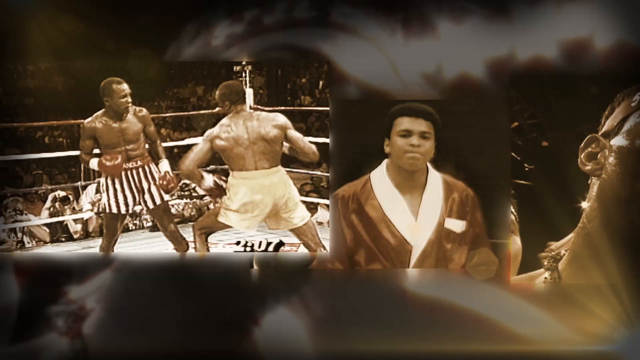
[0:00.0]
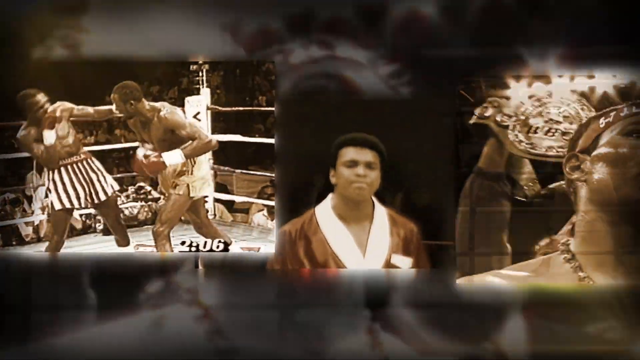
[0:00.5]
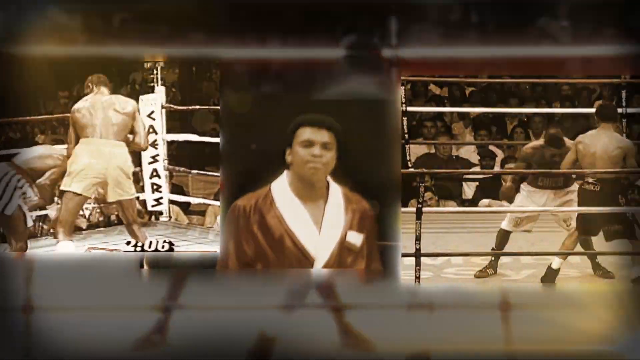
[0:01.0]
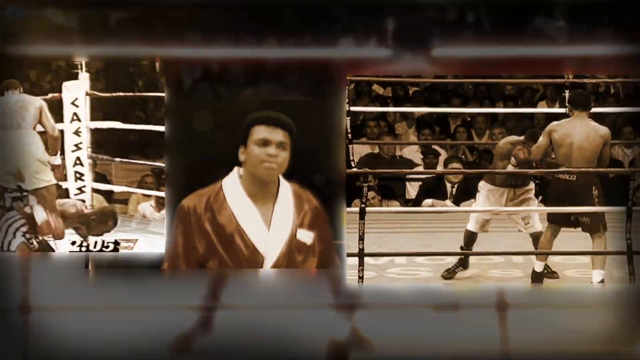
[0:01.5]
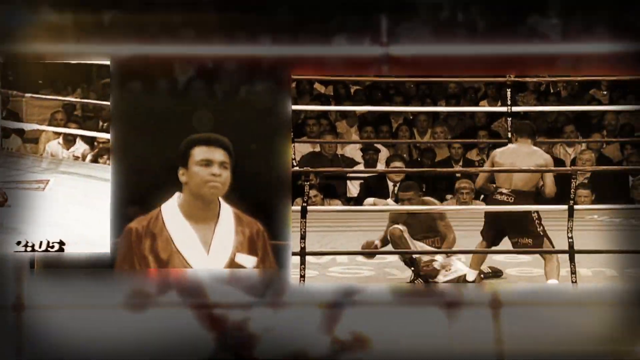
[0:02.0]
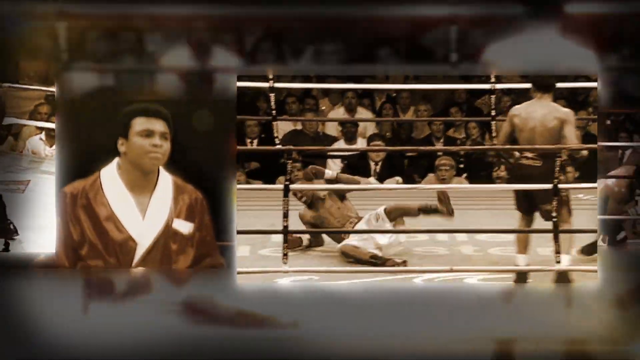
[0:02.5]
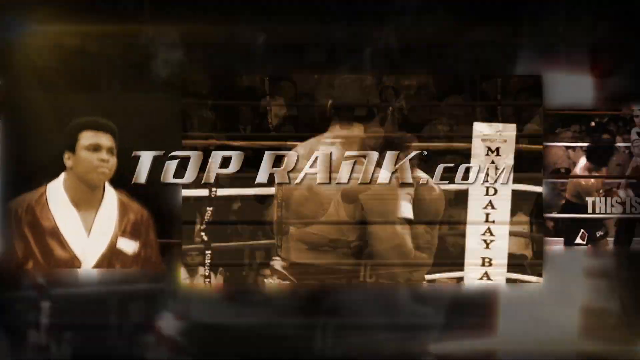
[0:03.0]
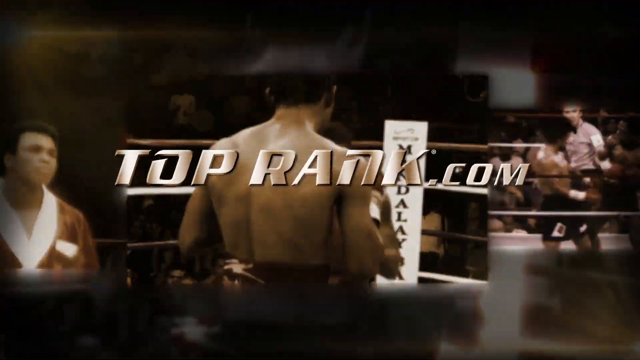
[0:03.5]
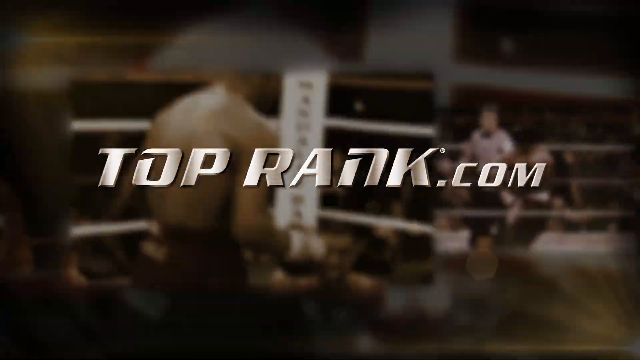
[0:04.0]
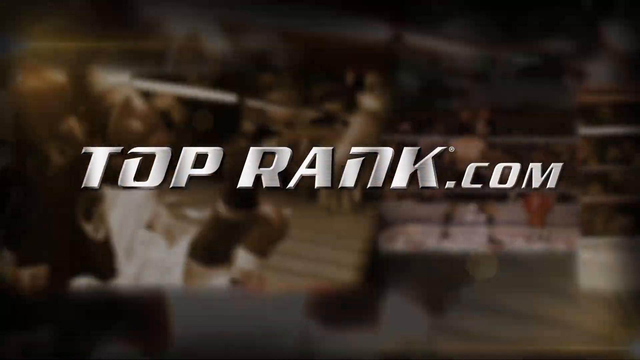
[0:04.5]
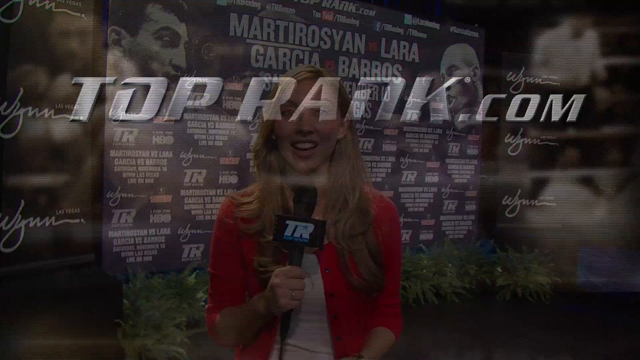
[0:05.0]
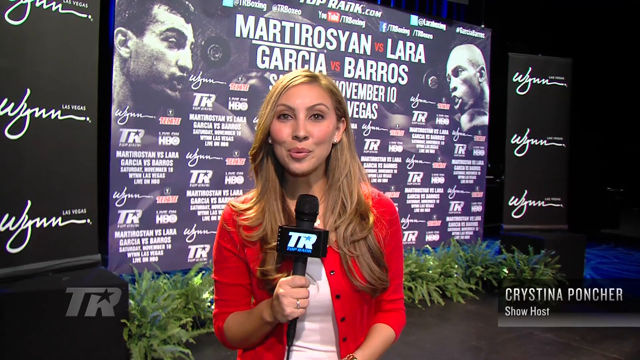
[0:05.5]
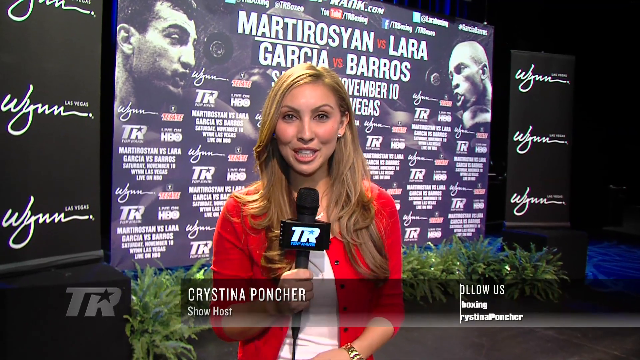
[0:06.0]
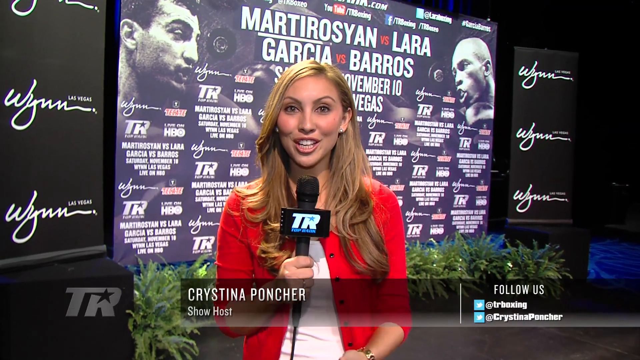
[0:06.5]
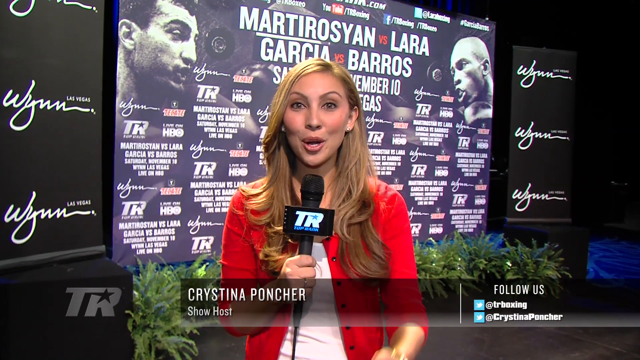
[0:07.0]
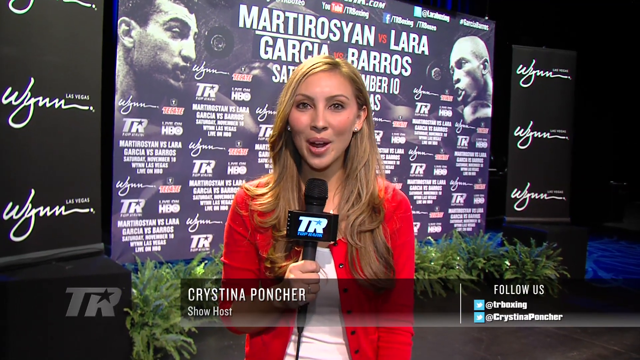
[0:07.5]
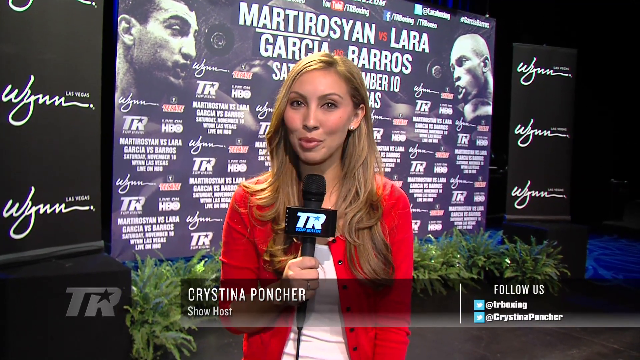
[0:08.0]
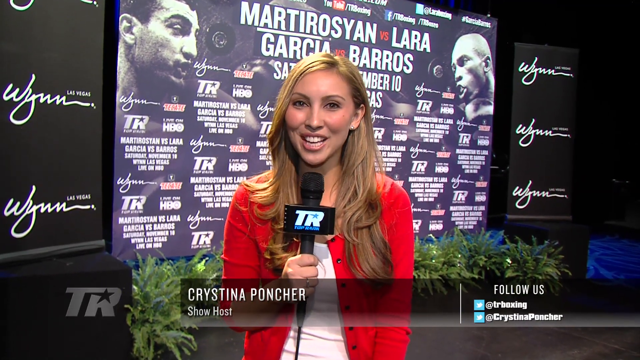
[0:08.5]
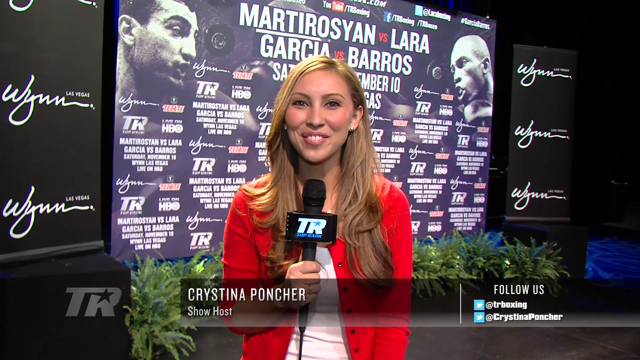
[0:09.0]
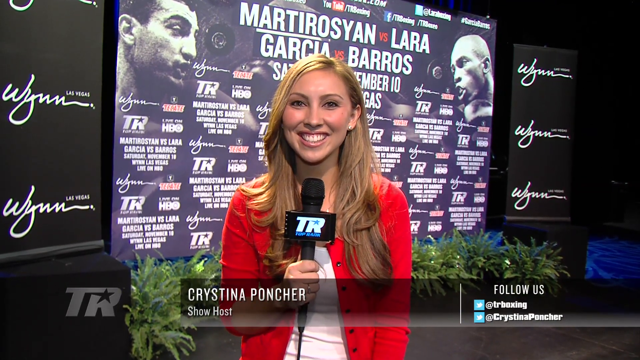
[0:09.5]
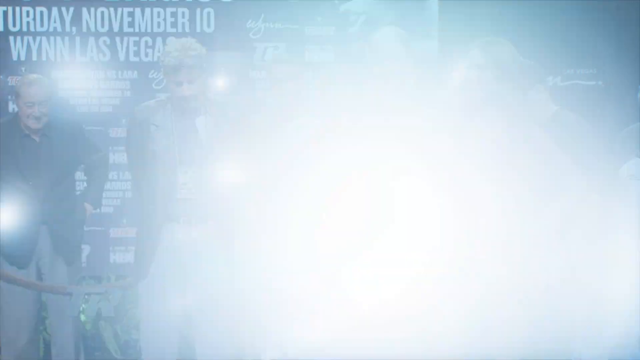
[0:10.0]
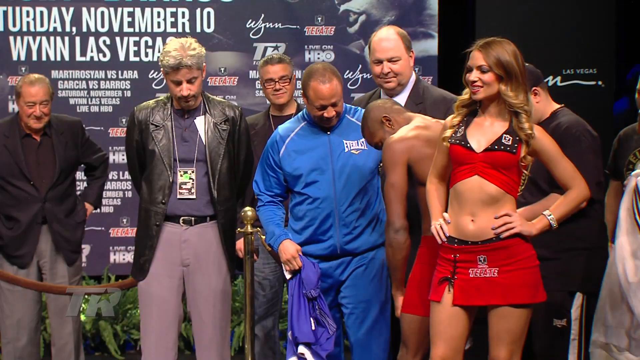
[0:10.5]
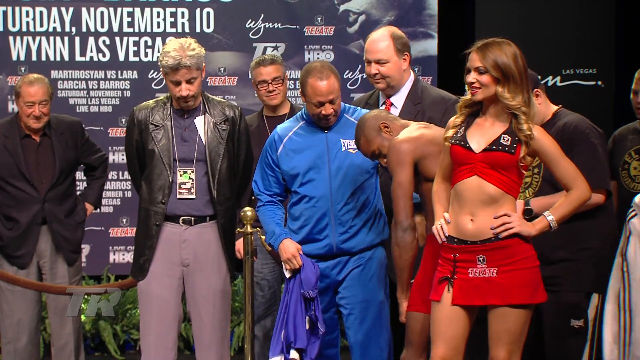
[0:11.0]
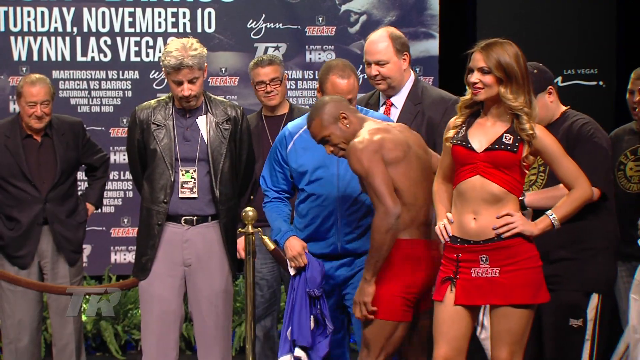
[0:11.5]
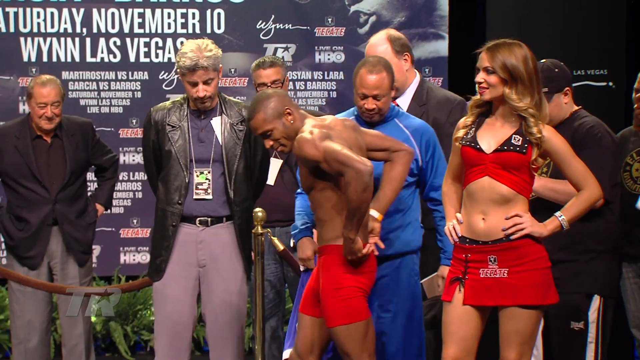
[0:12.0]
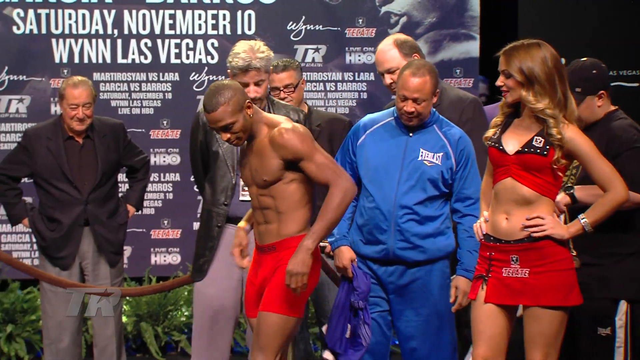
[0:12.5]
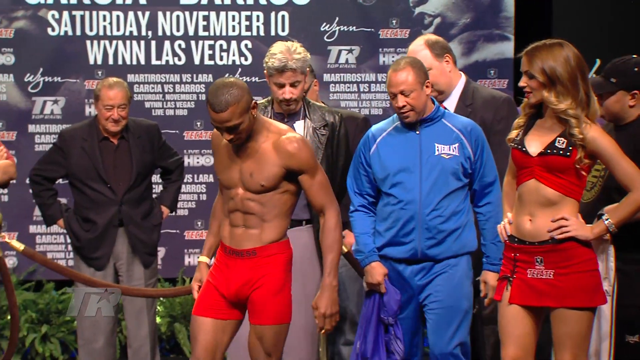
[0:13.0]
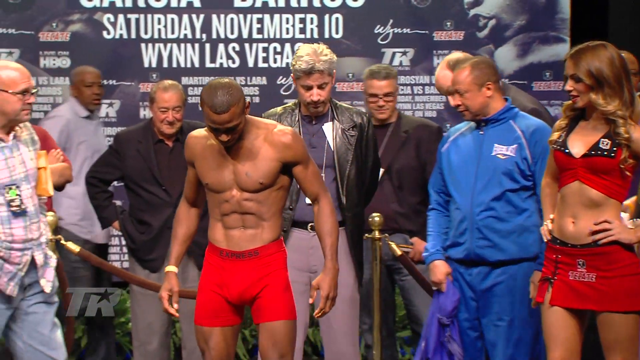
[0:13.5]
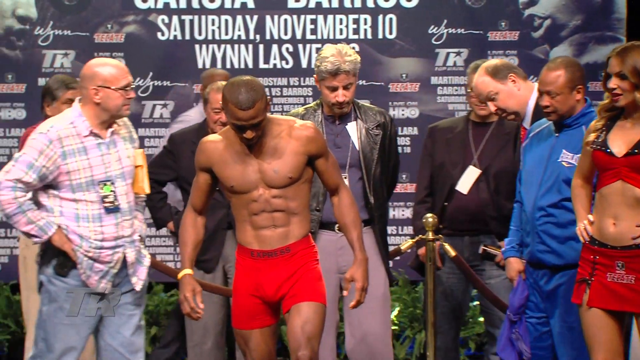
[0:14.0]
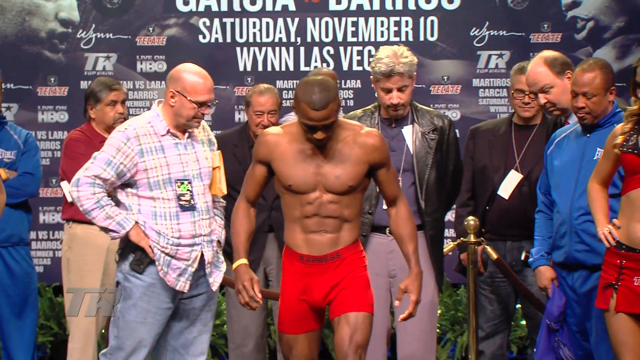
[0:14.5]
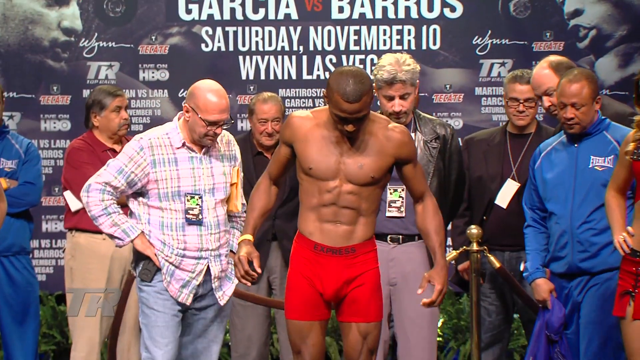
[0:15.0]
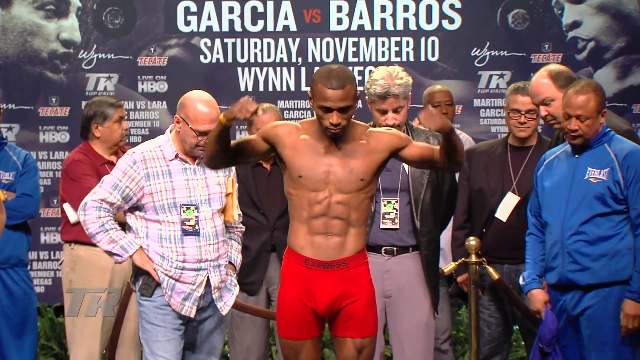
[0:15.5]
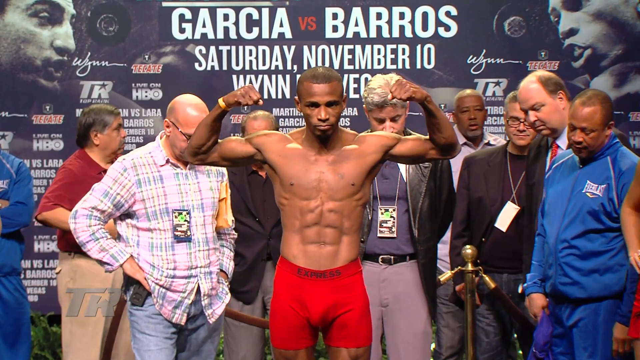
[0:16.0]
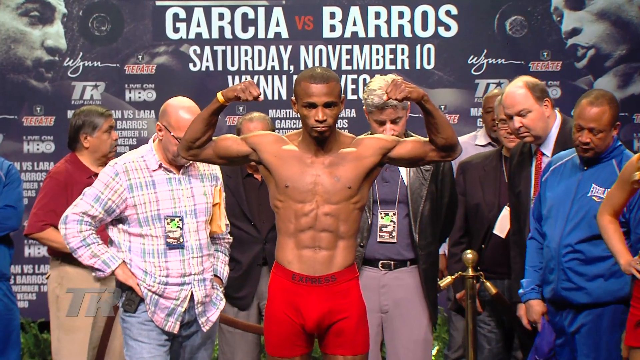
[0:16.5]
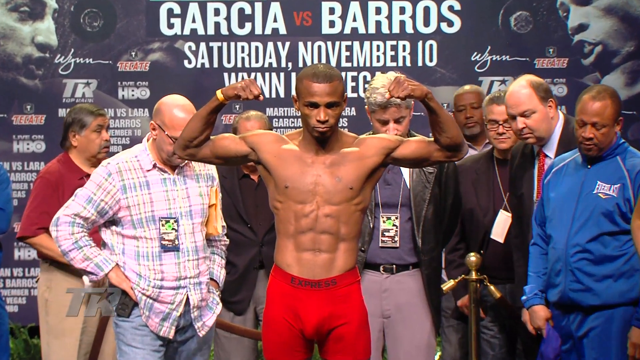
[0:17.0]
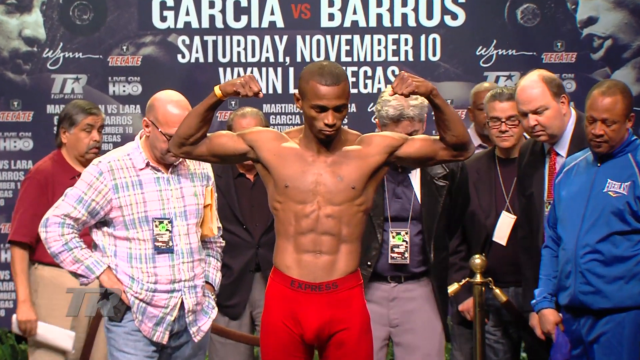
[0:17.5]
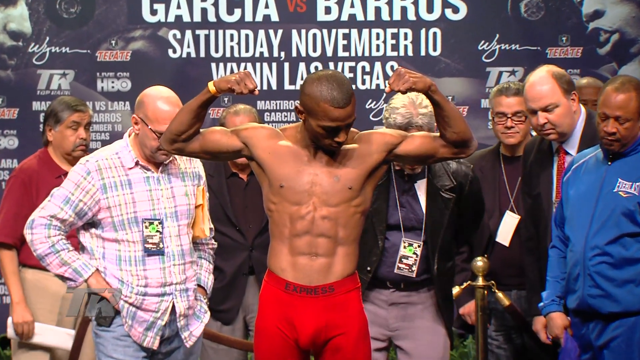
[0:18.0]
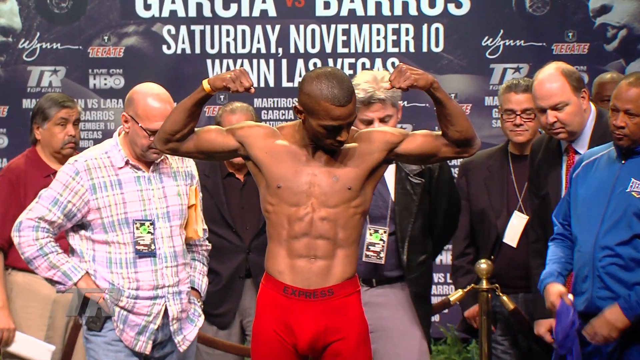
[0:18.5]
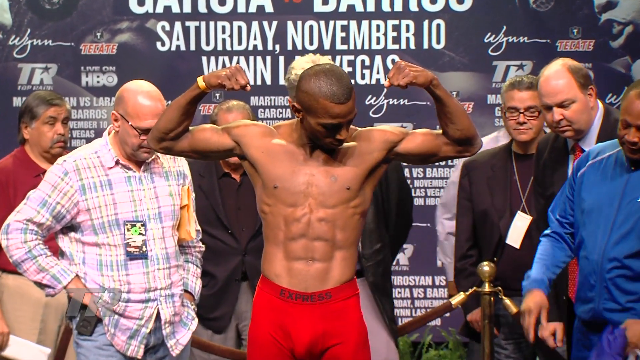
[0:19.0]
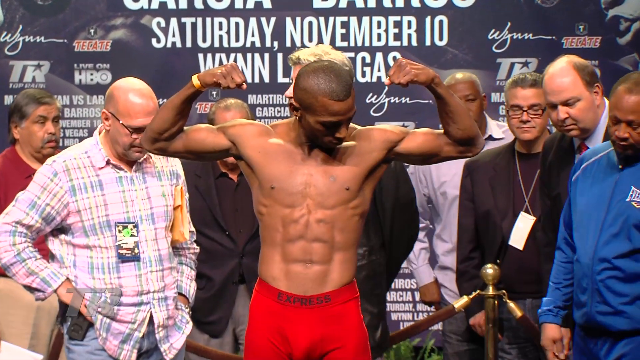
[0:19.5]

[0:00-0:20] Brown and white images appear, seemingly of Muhammad Ali. As the shots change, metallic all-capital text appears reading "toprank.com". The scene fades to a current matchup. A woman named Christina Poncher, the show host for toprank.com, smiles as she talks to the viewer, the top row of her teeth visible as she speaks. Behind her is what appears to be a match happening in Las Vegas, seemingly on November 10th; most of the letters are visible but not the first two. To the right of her, text reads "follow us at the TR Boxing" along with "Christina Poncher". The video then switches to a group of older men, the fighter, and a showgirl posing with her hands on her hips. The fighter, in red shorts, is well fit with a six pack. He gets on a podium-like platform and raises both arms to flex his biceps, looking down at his left chest, which appears on the right side of the screen.